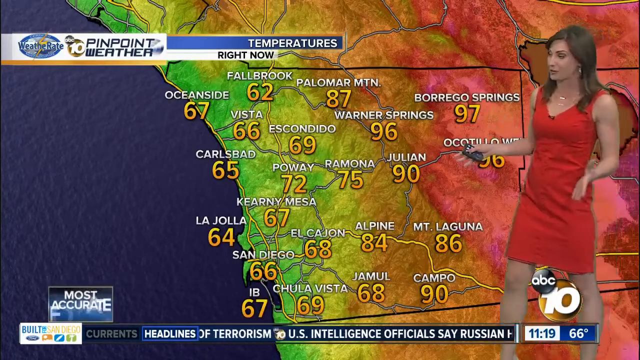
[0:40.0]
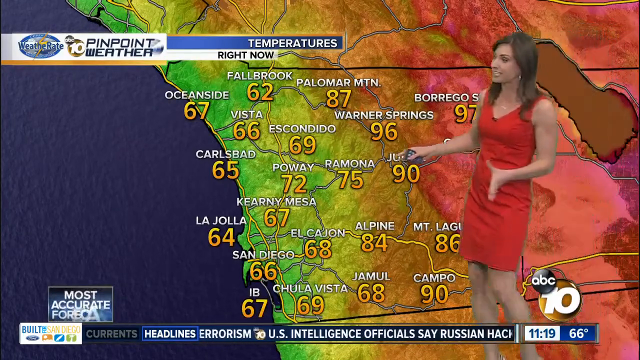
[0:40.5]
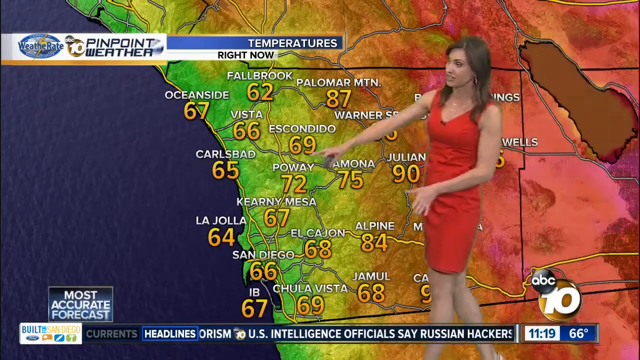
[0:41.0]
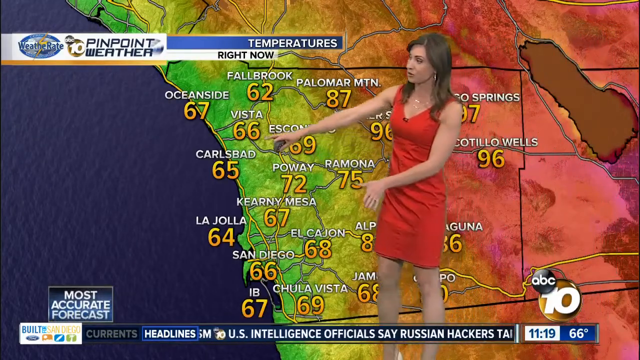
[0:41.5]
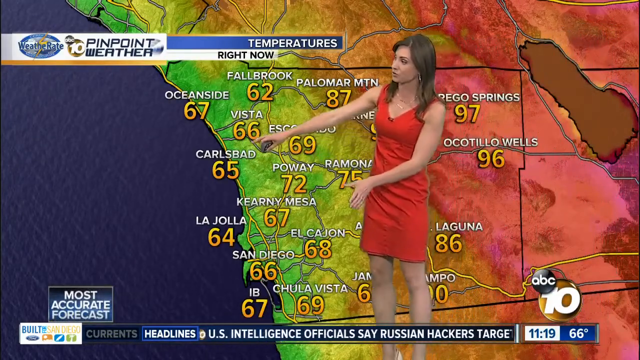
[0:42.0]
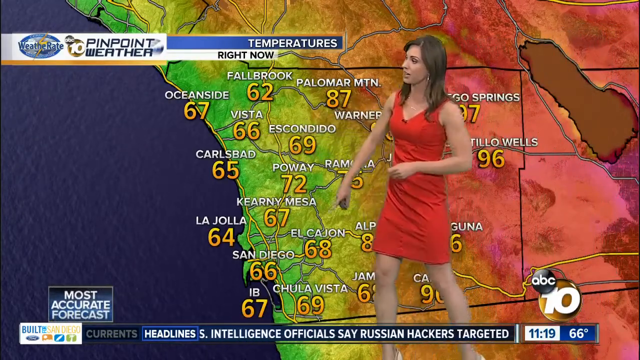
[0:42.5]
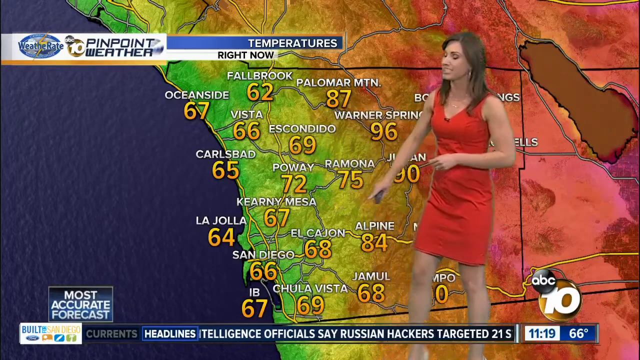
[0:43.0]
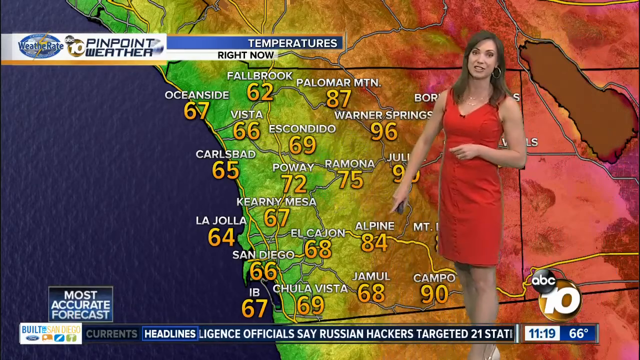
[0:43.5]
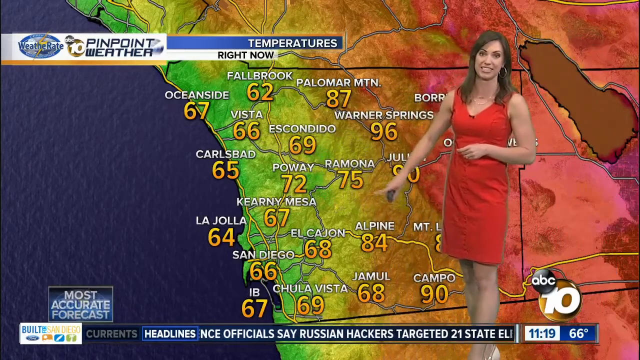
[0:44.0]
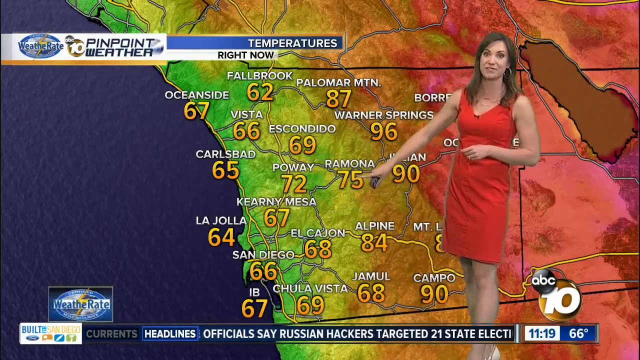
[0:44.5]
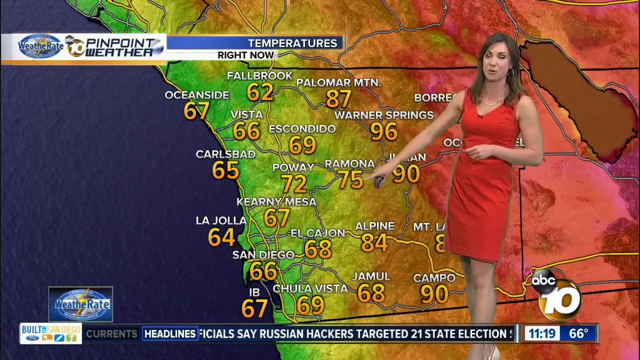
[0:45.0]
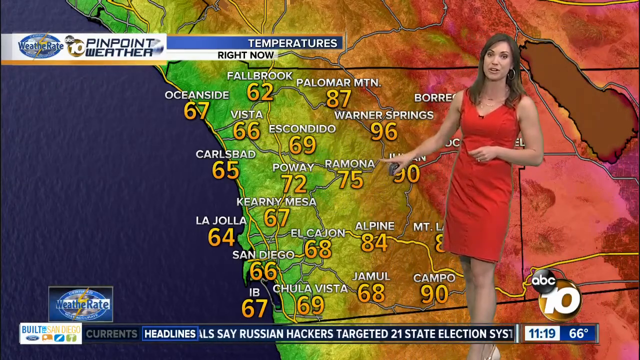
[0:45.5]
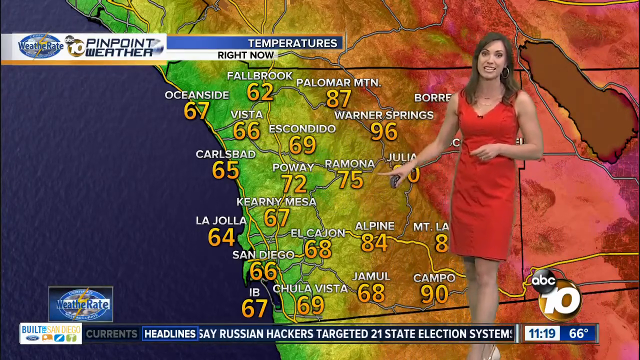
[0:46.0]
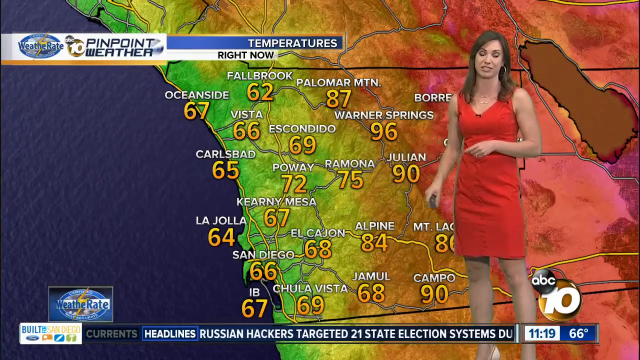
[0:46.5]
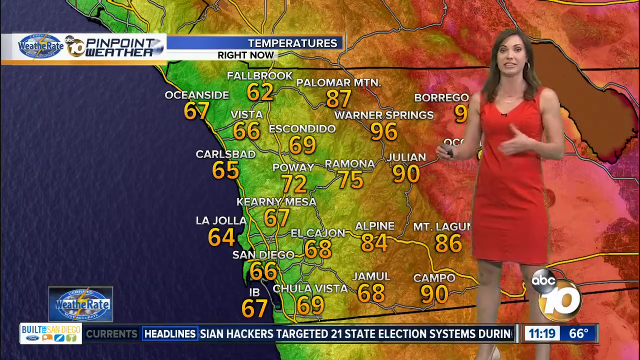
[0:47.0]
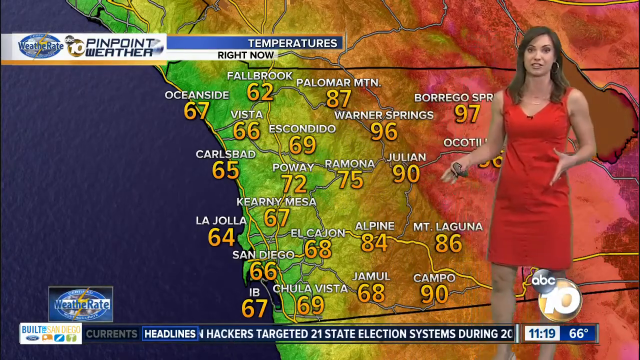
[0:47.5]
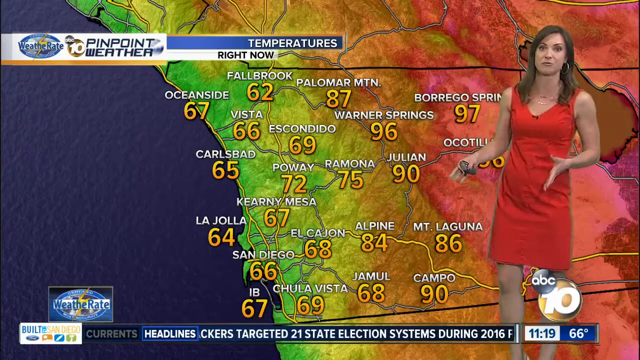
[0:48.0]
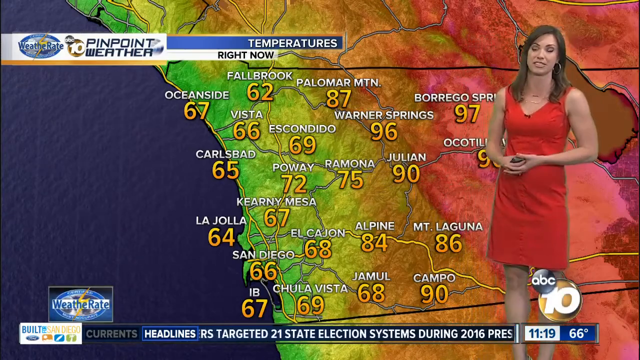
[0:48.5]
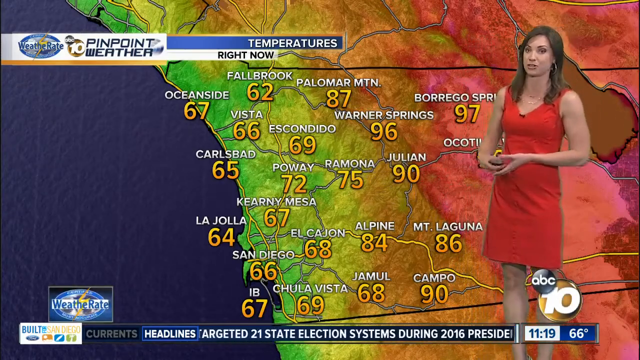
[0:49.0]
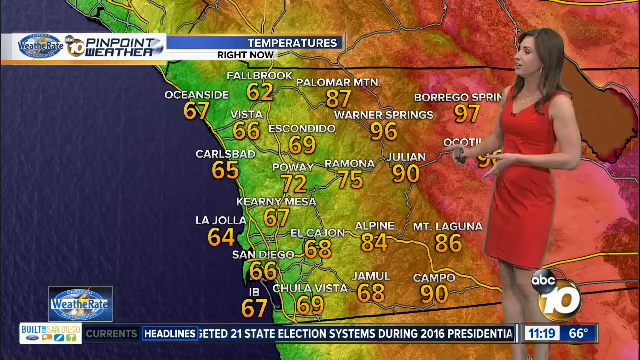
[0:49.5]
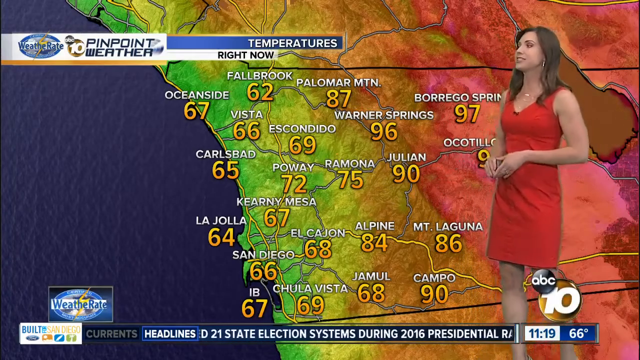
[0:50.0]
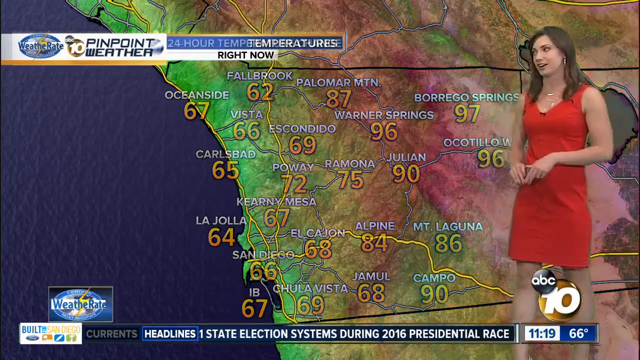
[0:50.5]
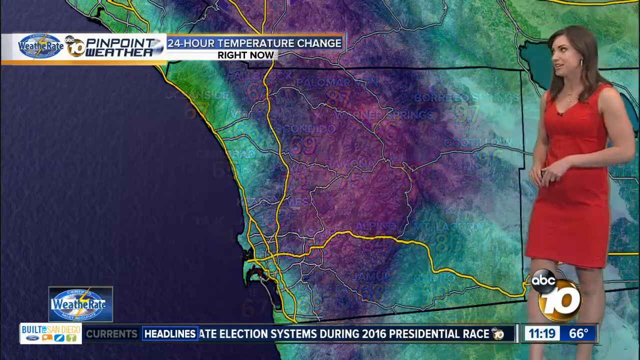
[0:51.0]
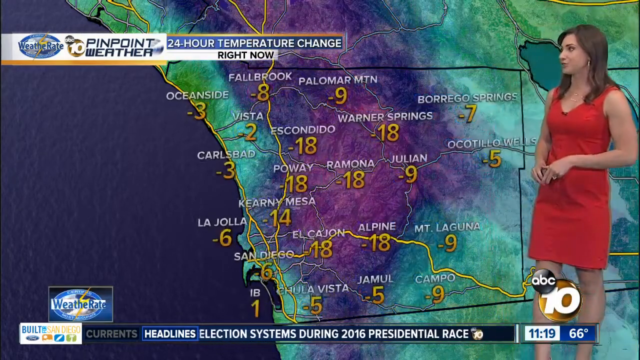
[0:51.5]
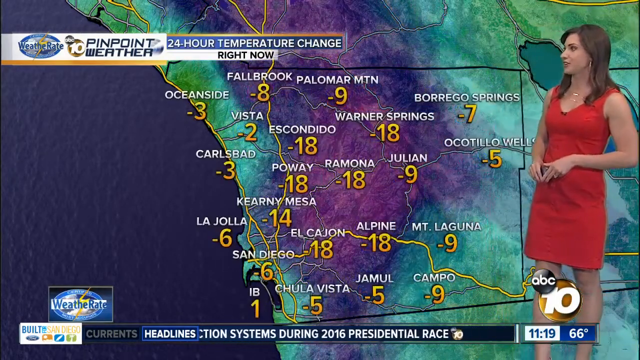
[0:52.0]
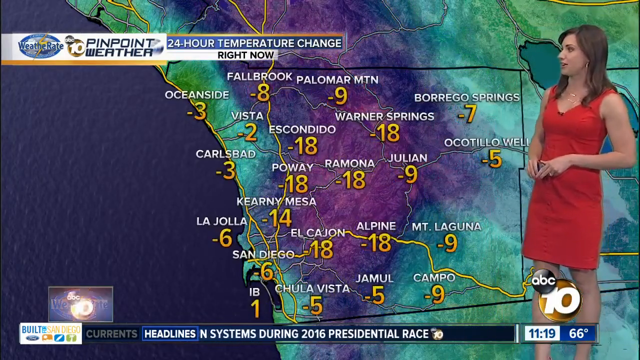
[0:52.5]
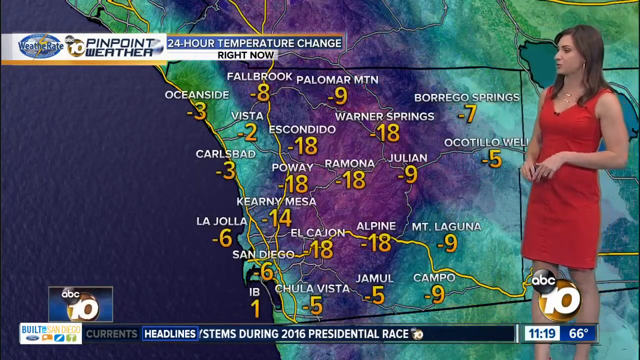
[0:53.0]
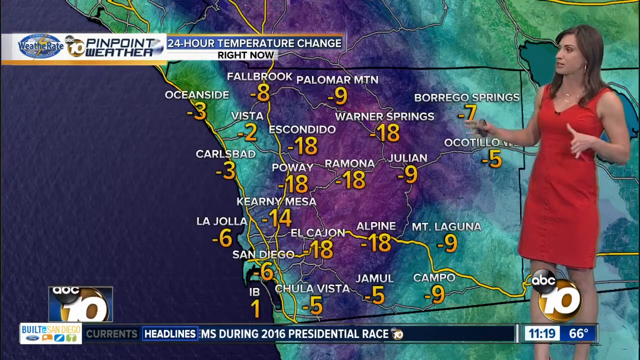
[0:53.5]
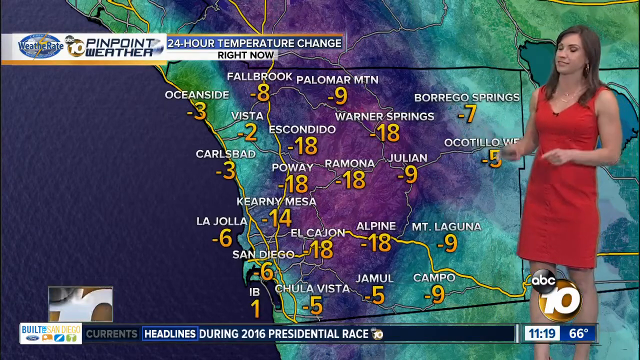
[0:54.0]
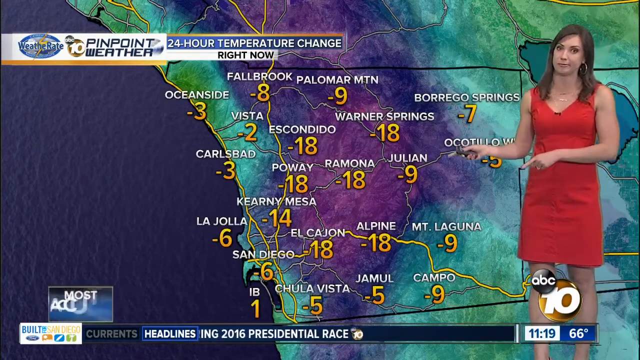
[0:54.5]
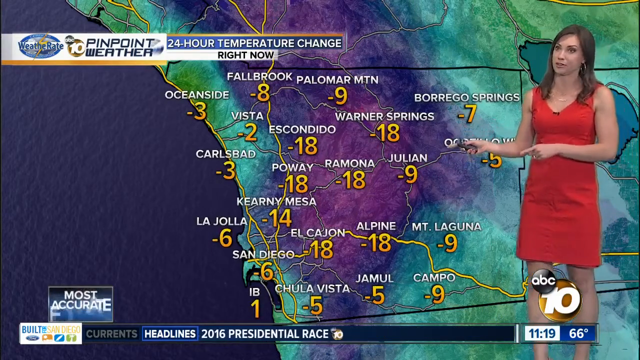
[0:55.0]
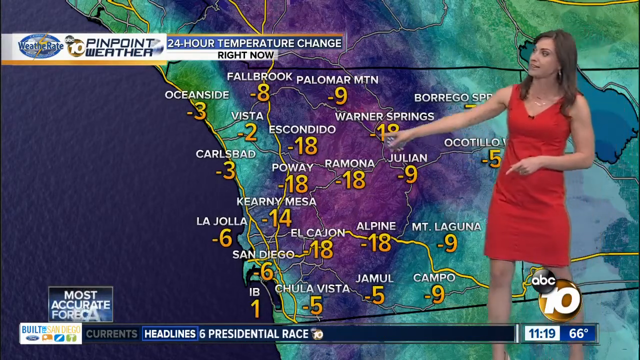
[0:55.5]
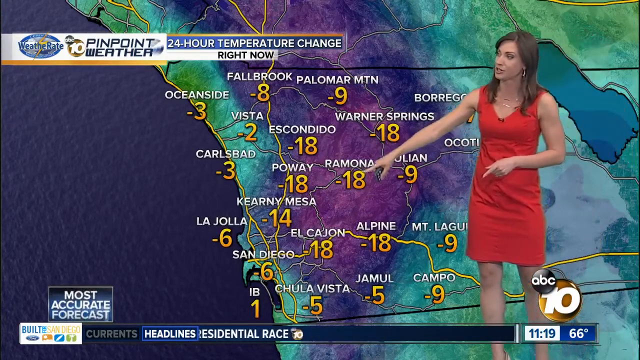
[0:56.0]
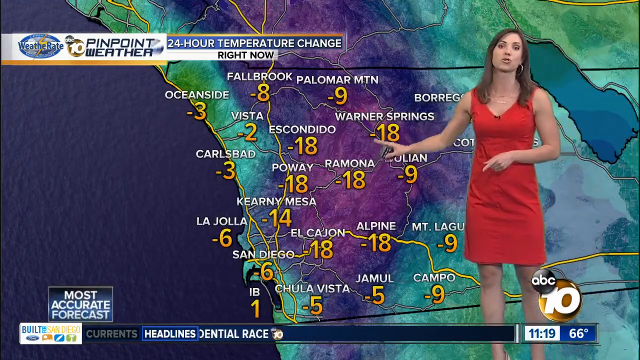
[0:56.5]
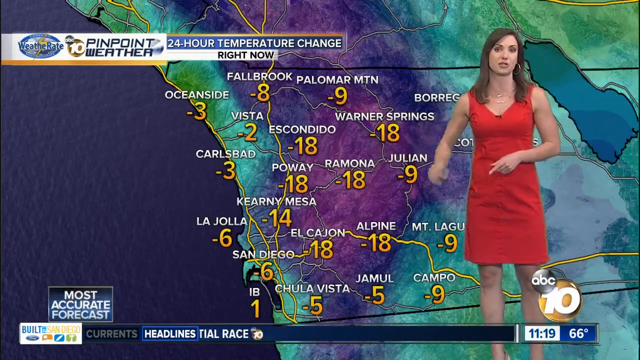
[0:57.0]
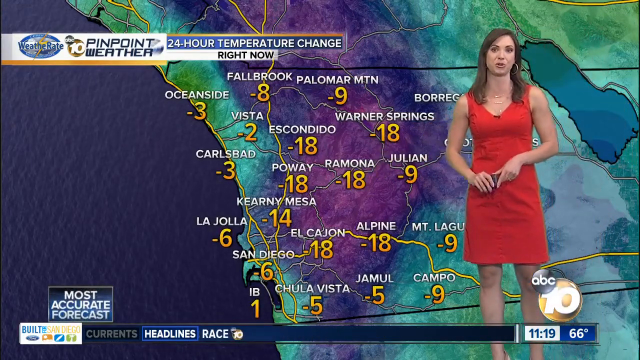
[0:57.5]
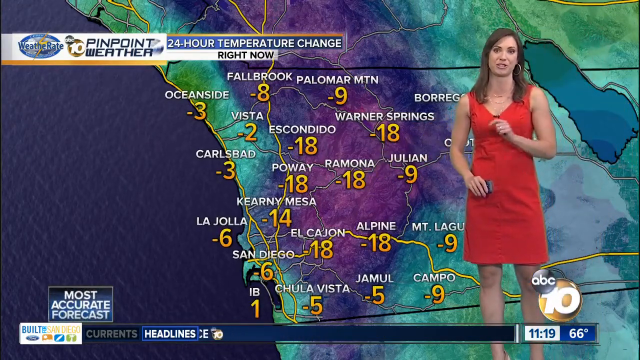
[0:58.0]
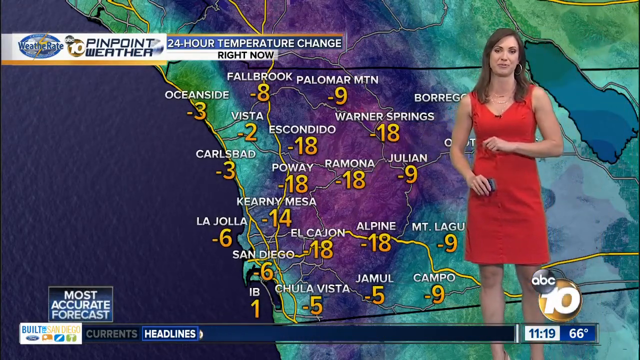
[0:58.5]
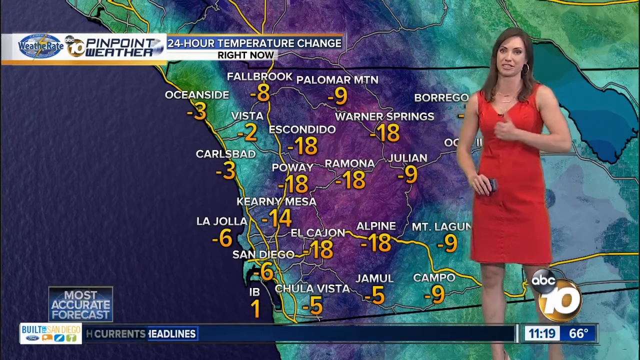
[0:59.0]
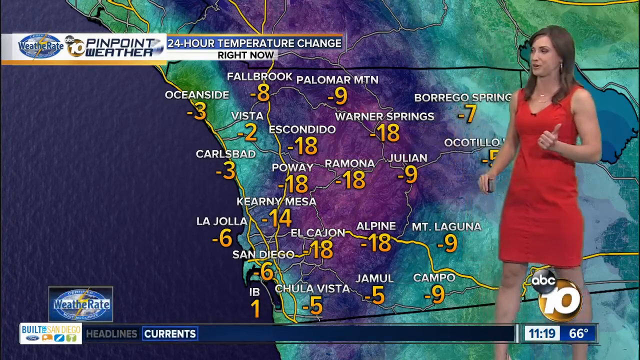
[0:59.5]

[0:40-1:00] Temperatures are shown for cities including Carlsbad 65, Ramona 75, Poway 72 and La Jolla 64. A 24-hour temperature change right now is then displayed, with La Jolla at minus 6; over 10 to 15 cities are shown with their values. The presenter goes through the temperatures in the different cities, including Julian.